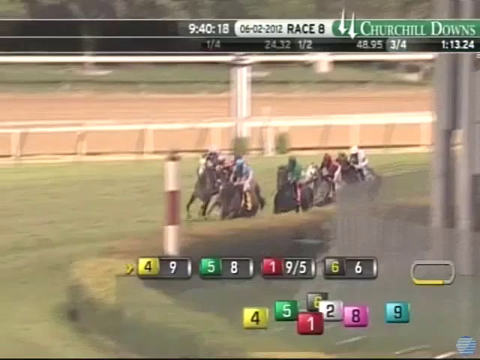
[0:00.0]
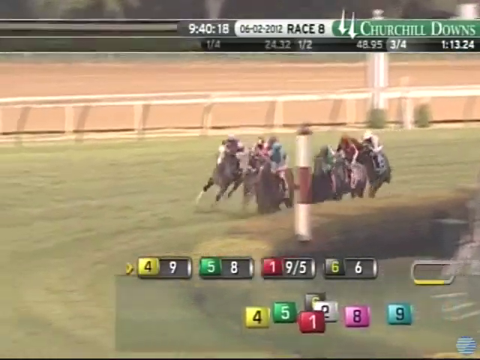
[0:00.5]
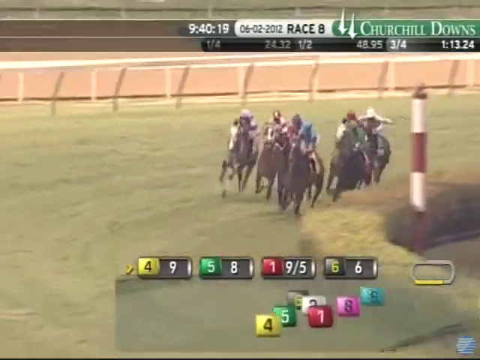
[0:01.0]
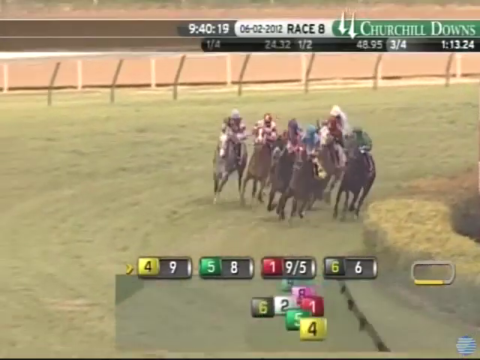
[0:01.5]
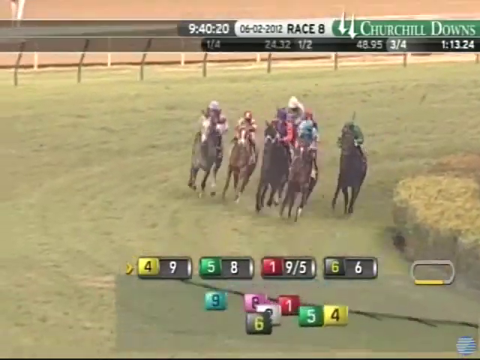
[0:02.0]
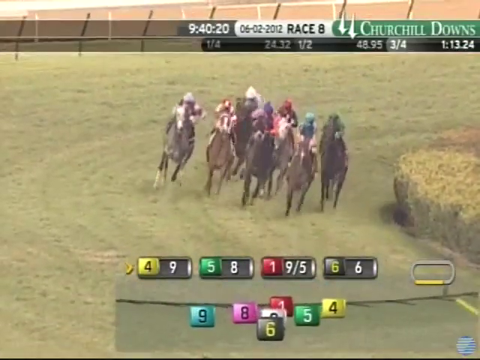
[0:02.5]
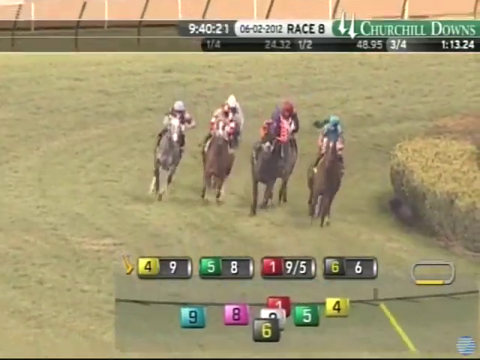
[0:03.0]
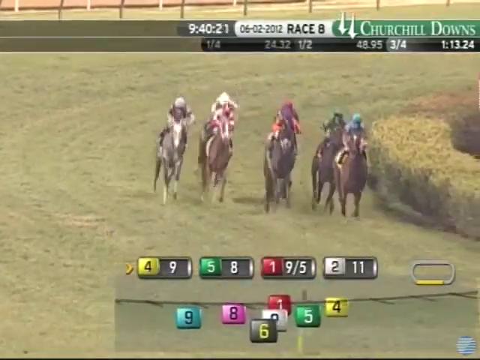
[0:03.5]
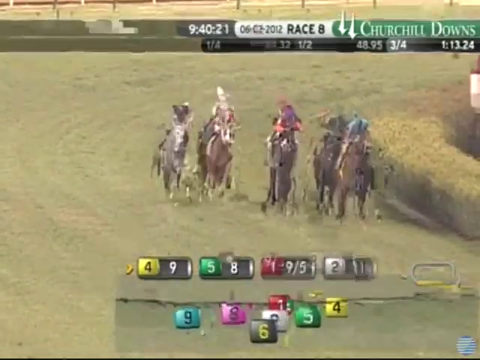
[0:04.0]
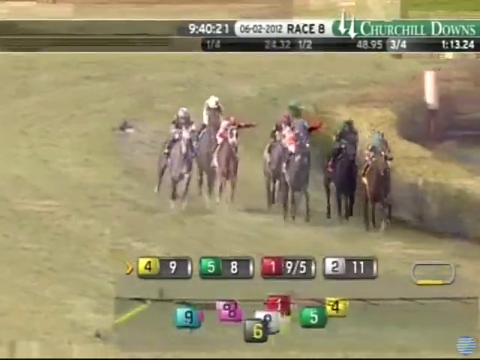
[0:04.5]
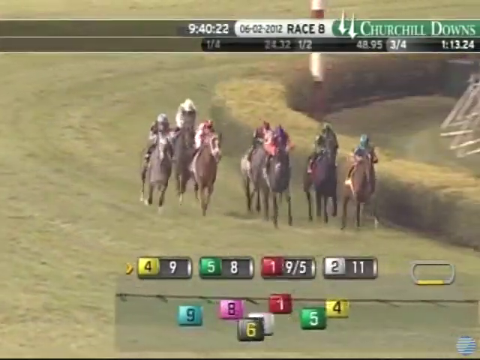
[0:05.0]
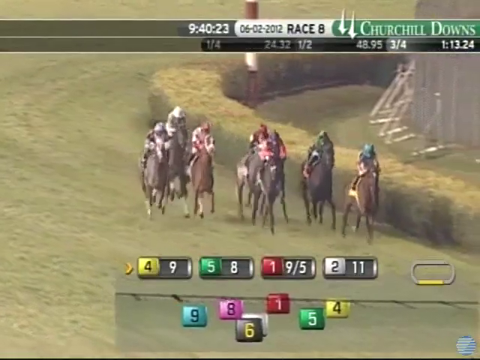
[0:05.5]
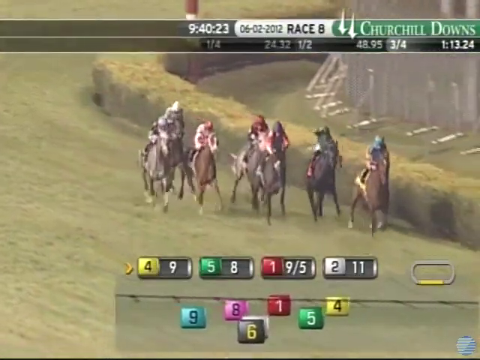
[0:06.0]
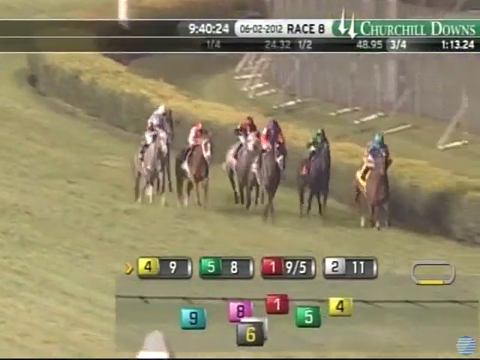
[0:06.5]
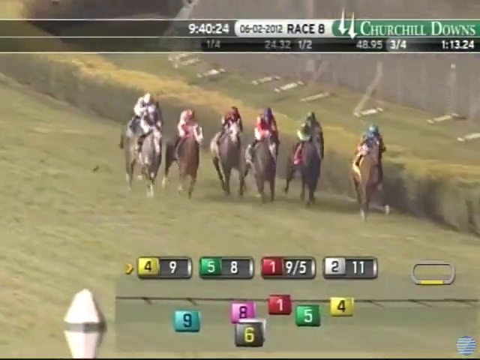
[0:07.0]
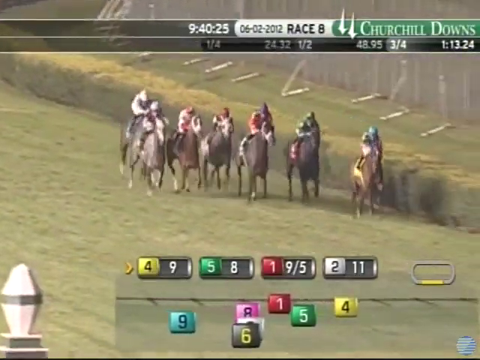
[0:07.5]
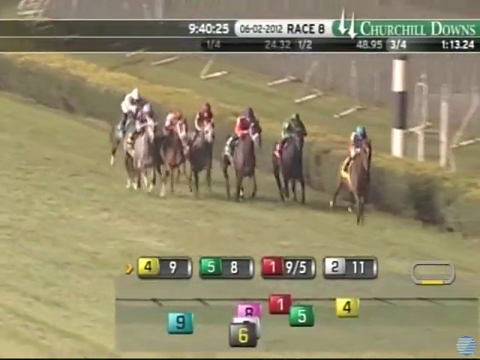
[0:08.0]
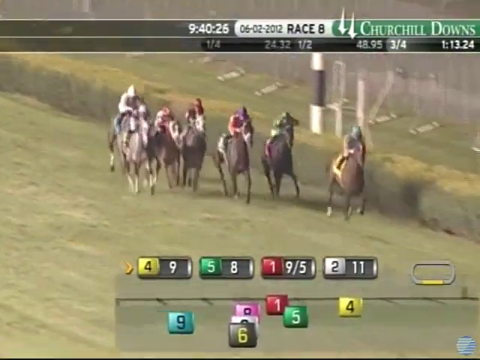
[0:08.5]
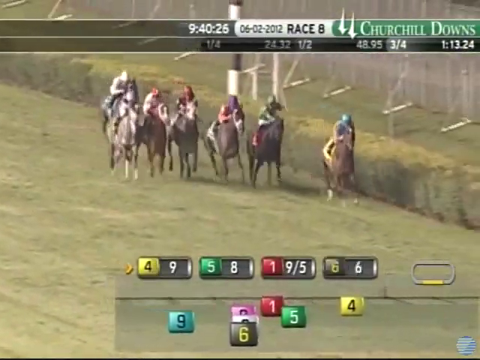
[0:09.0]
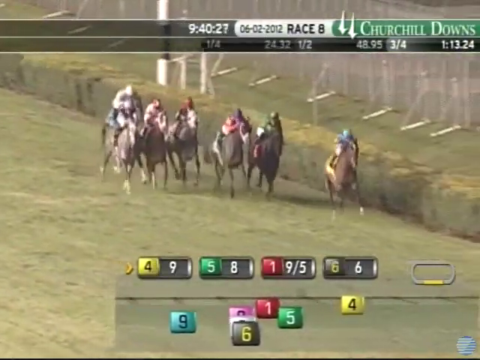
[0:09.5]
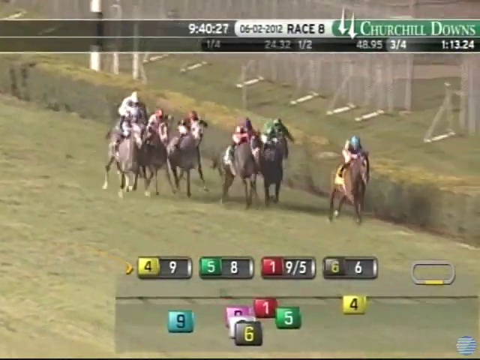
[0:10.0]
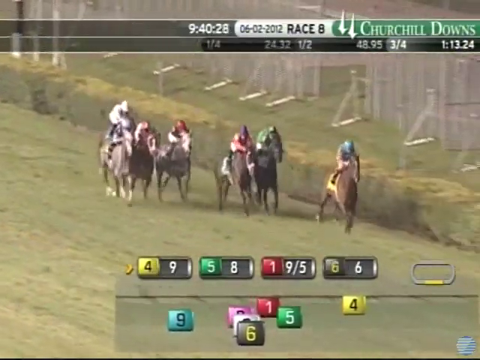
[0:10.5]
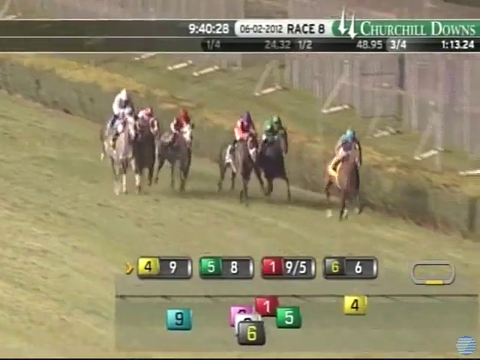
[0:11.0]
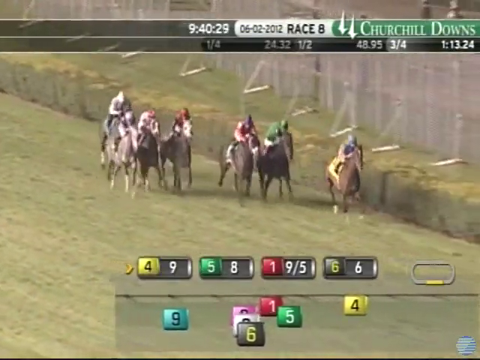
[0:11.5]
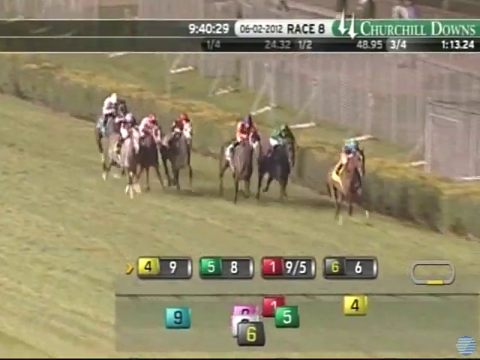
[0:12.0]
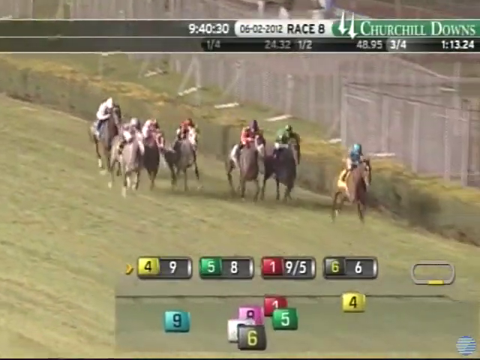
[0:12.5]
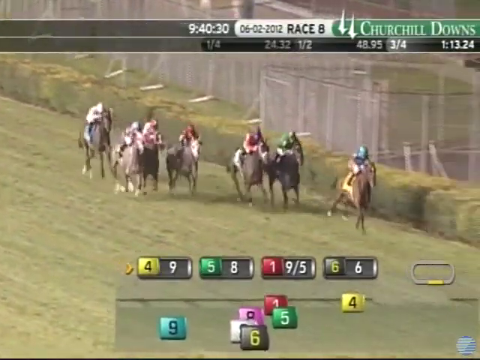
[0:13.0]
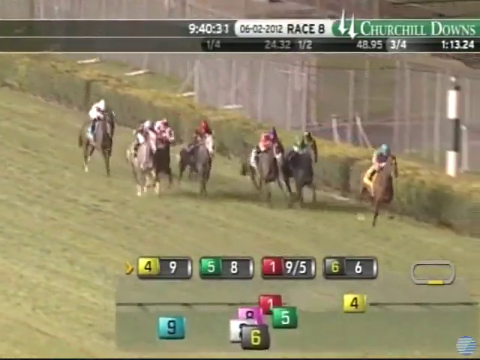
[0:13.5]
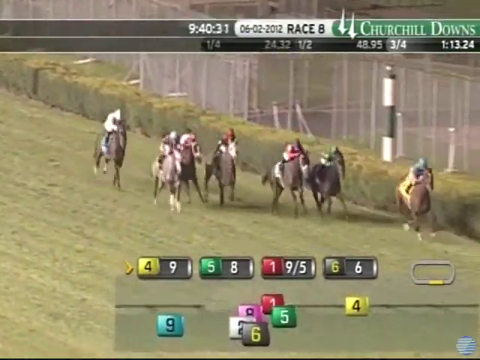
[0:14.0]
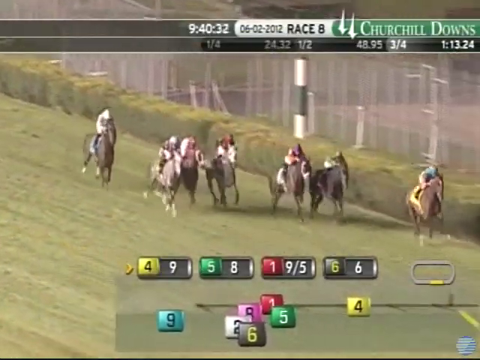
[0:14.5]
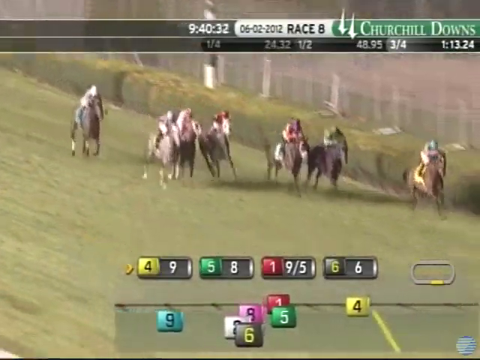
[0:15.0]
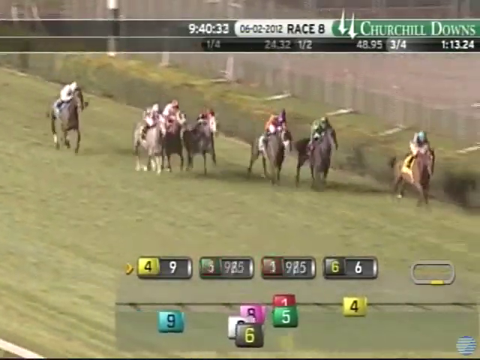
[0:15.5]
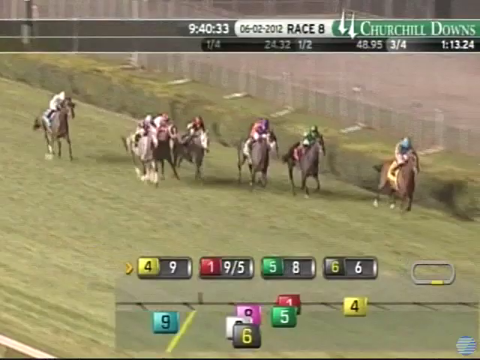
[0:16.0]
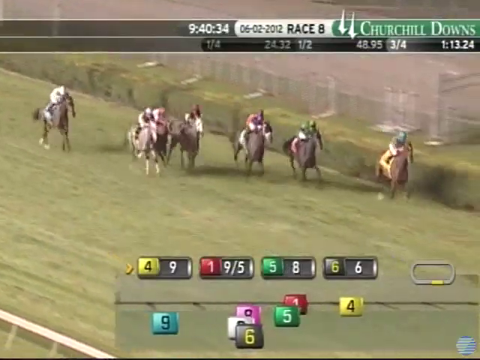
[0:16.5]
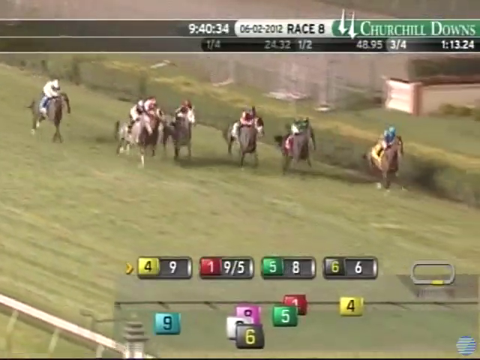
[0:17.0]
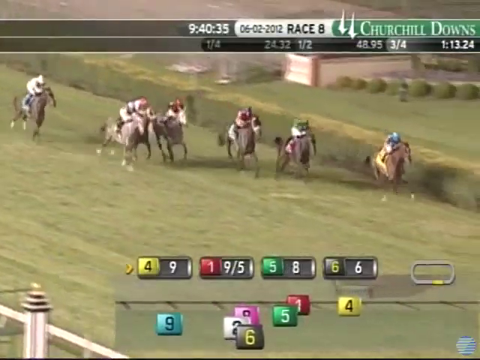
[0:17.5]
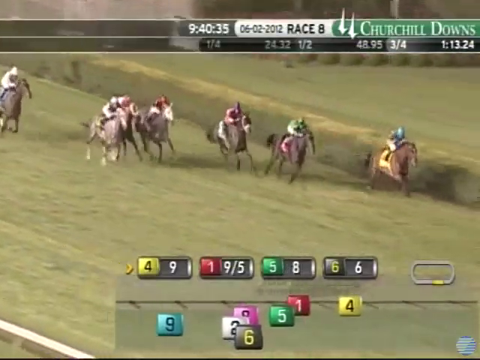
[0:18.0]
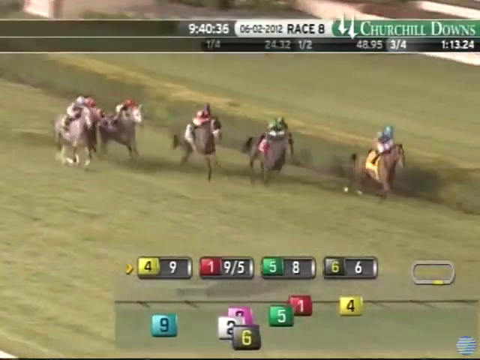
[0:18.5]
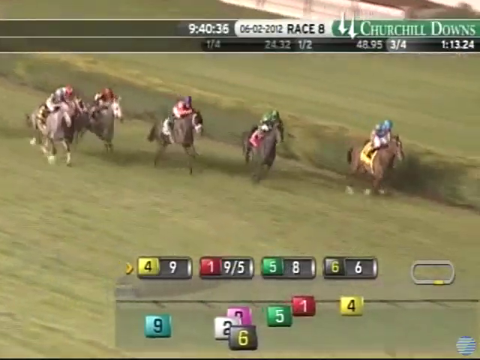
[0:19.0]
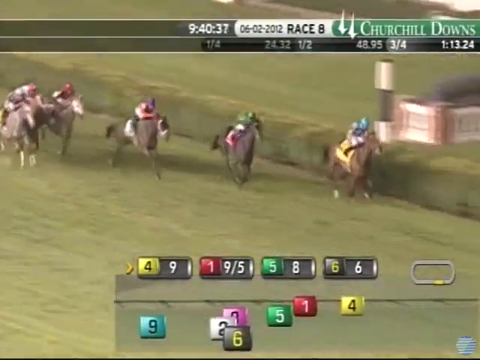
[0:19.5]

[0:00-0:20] A horse race at Churchill Downs is underway. The race is on June 12, 2012 at 9:40, apparently in the morning, and it is race number 8, with seven horses running. The race is shown at the top of the screen, and down near the bottom the horses in first, second, third and fourth place are shown. At the bottom there are little squares showing what the race looks like from overhead, and a graphic of the track shows which area of the track the horses are on. The horses seem to be nearing the end of the race; the one-half mark is visible on the track graphic, but not the one-fourth mark.